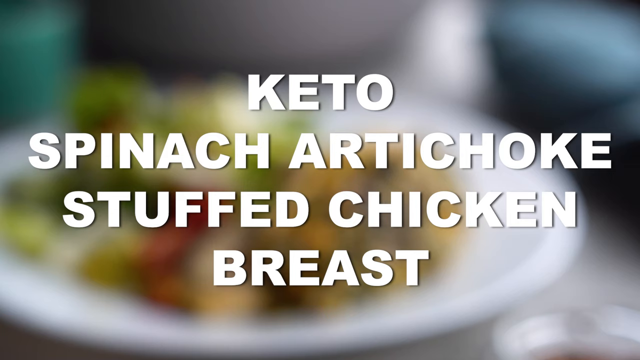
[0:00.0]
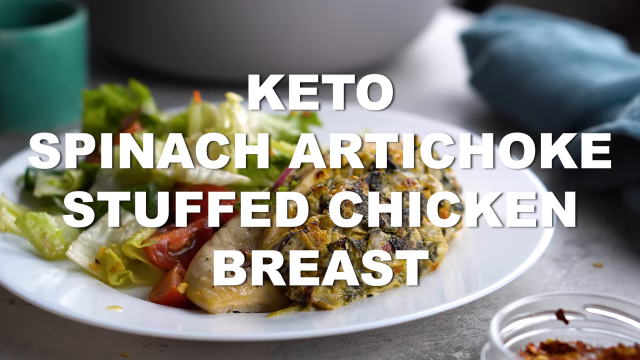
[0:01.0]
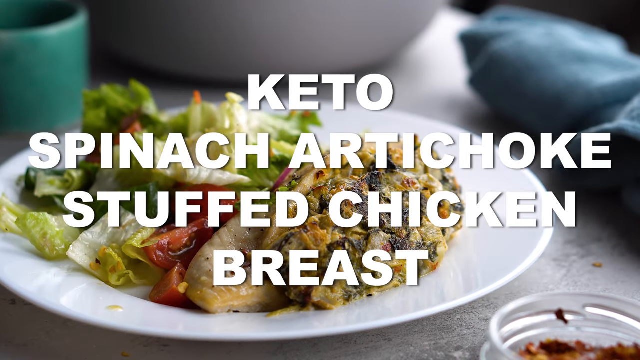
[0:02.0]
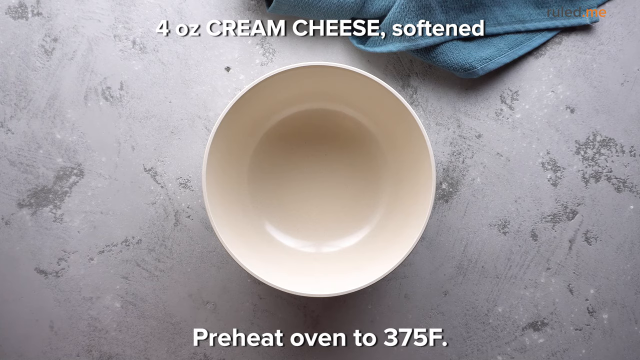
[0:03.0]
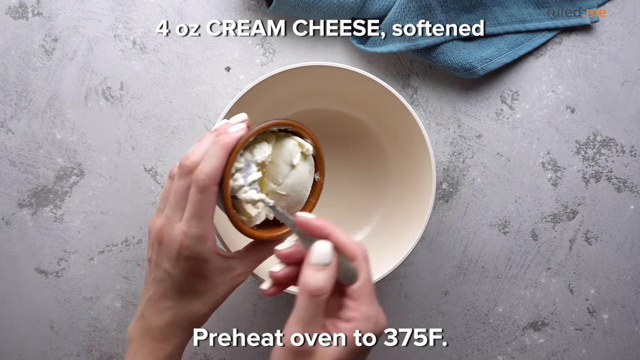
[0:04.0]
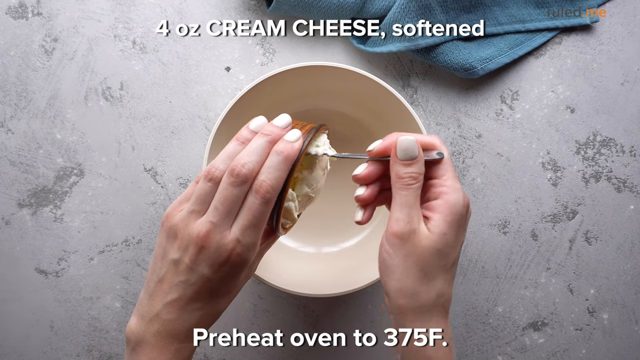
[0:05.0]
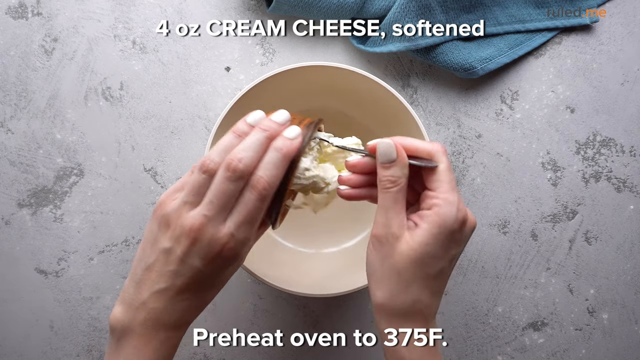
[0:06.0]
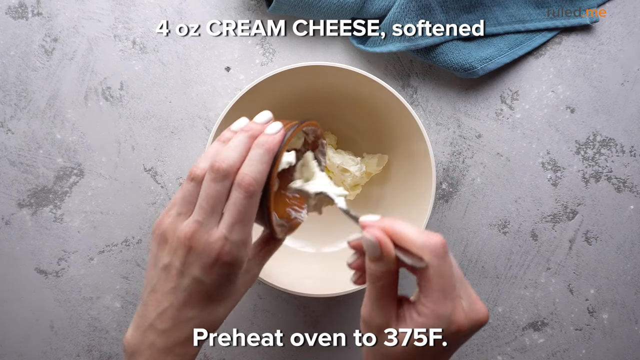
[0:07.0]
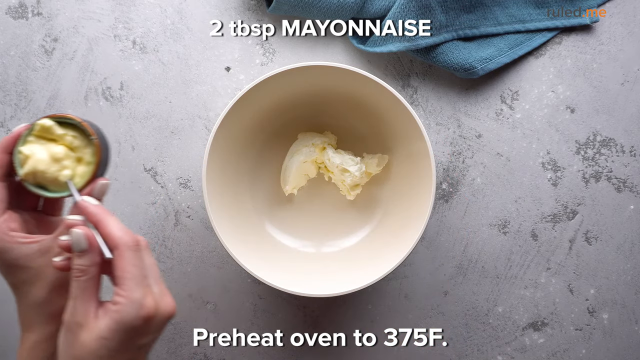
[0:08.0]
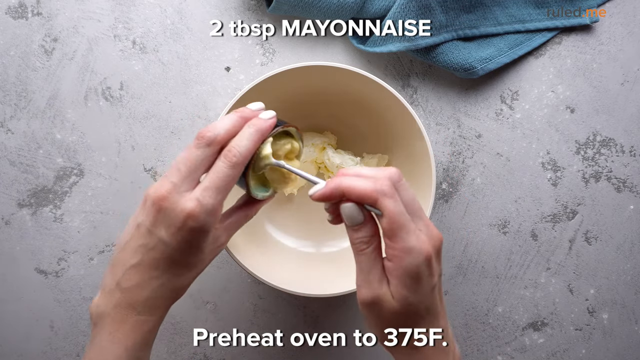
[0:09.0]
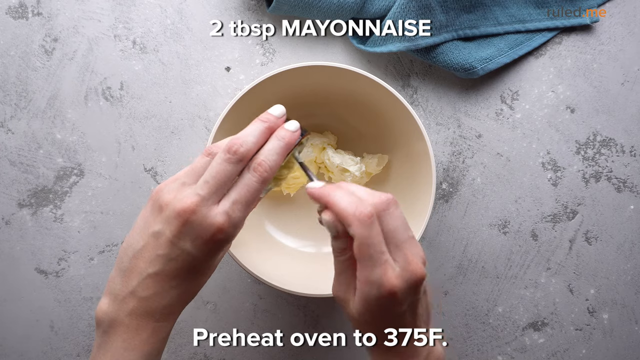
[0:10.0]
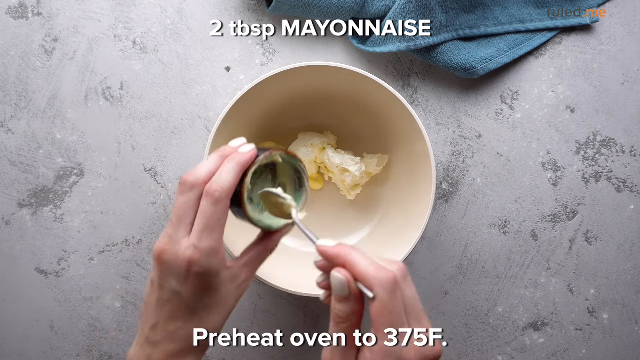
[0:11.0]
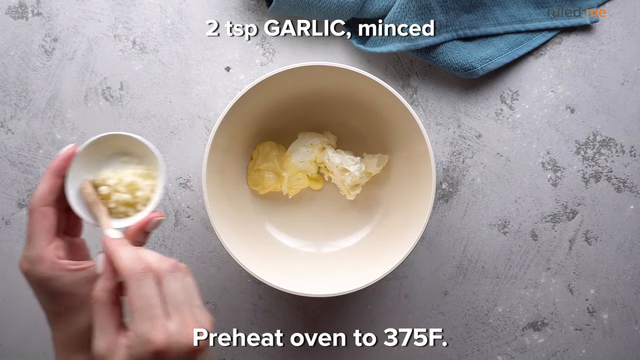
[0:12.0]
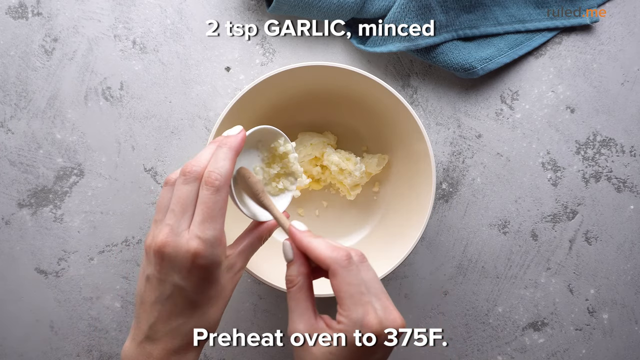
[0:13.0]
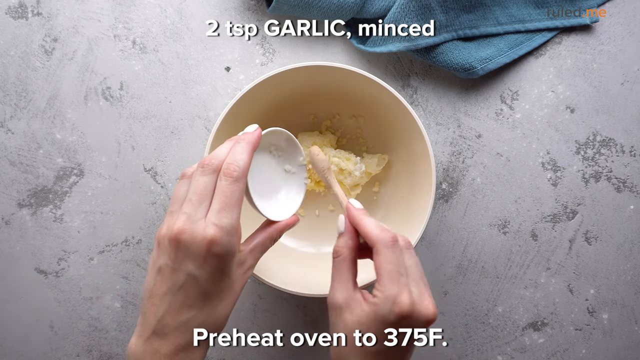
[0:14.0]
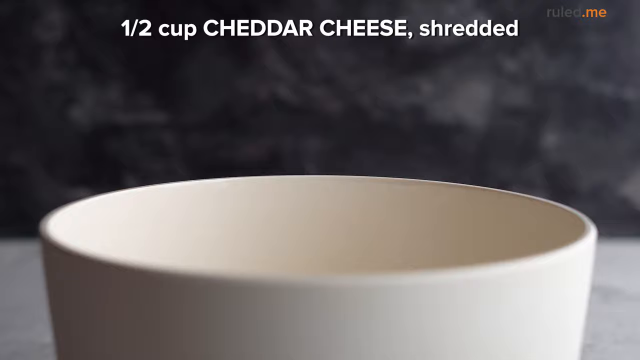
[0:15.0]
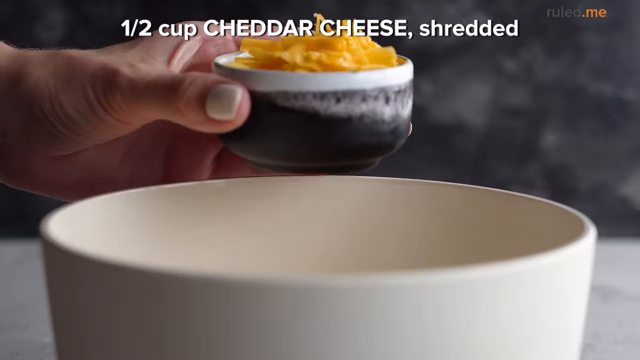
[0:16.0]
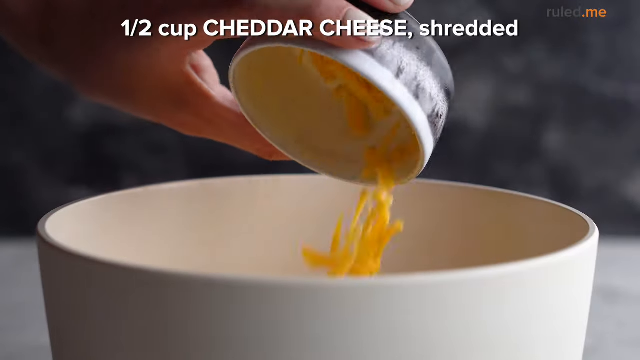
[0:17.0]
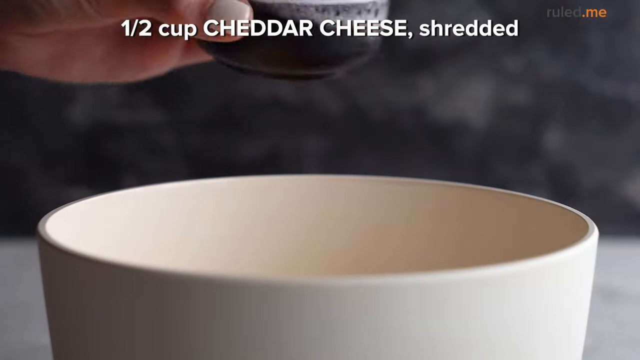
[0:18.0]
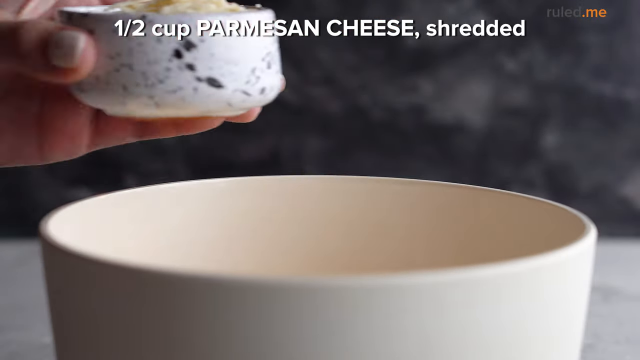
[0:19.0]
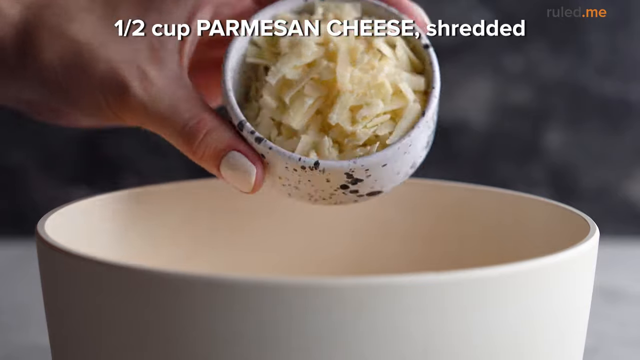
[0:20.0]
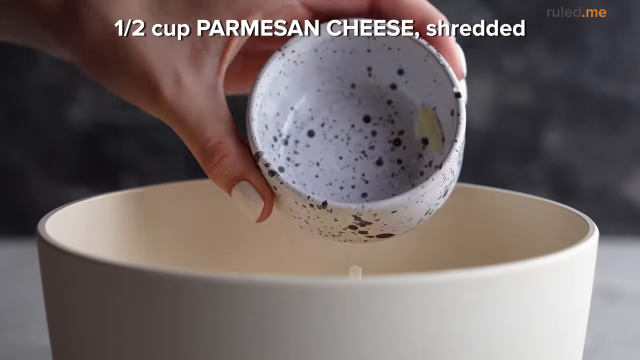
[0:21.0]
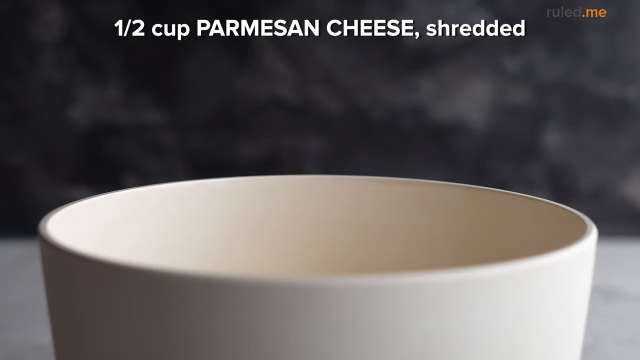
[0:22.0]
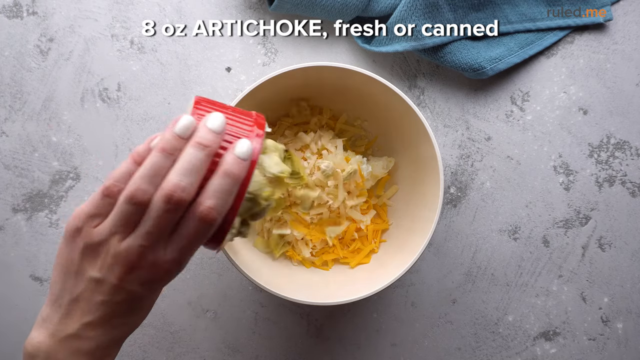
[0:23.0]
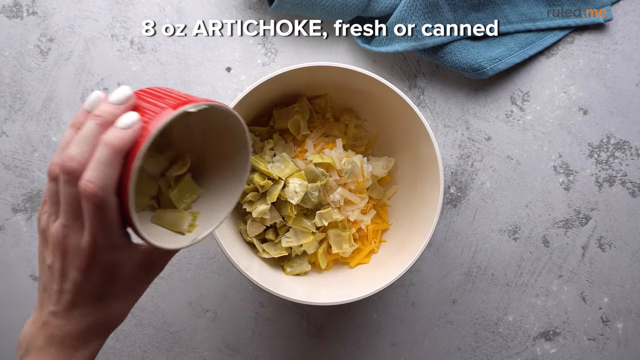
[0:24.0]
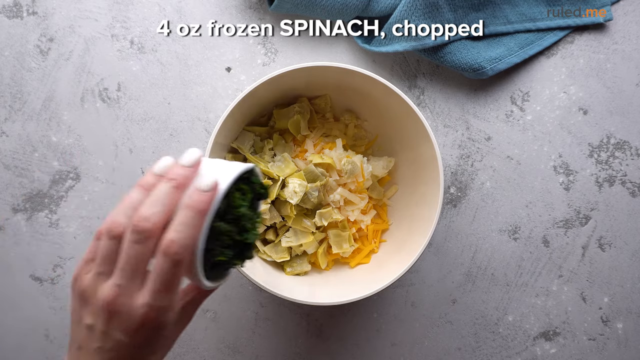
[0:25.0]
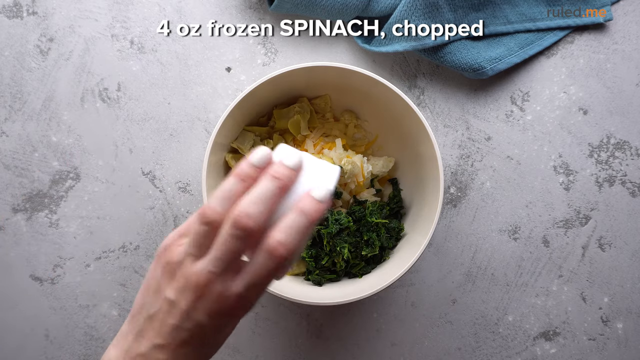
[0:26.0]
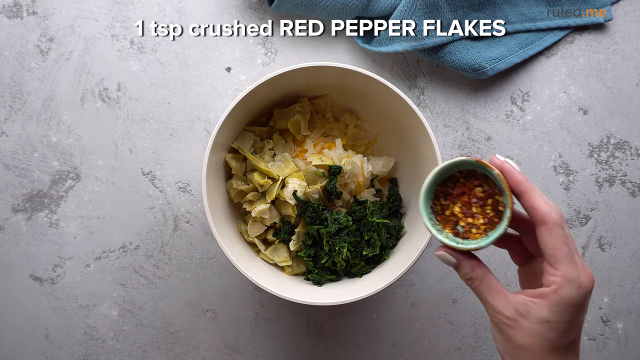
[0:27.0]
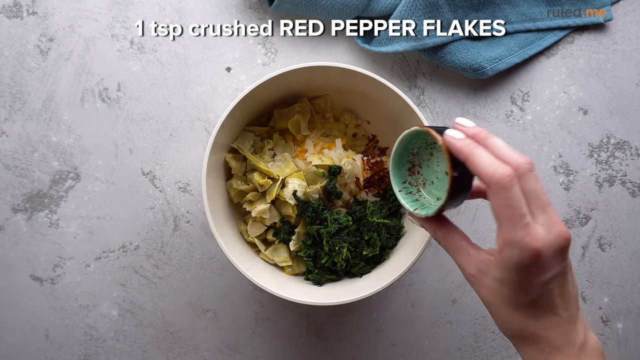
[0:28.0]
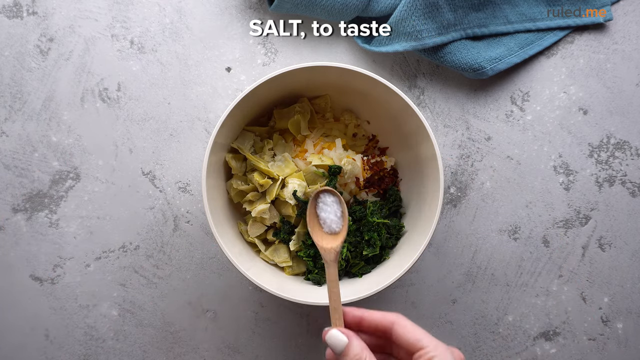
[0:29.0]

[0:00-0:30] The video opens with the words "keto, spinach" and quickly presents a recipe. The dish's title, keto spinach artichoke stuffed chicken breast, appears with the finished chicken breast shown behind the words. A person adds ingredients, apparently cream cheese, mayonnaise and garlic, along with half a cup of shredded cheddar cheese, half a cup of Parmesan cheese, artichoke, spinach, red pepper flakes and salt to taste. The measurements, such as one teaspoon or one tablespoon, appear at the top of the screen as each ingredient is named. The pace is very fast. A hand brings in each small bowl, tips it to the side and dumps the contents into a larger cream-colored bowl, mostly with the left hand but sometimes with the right.